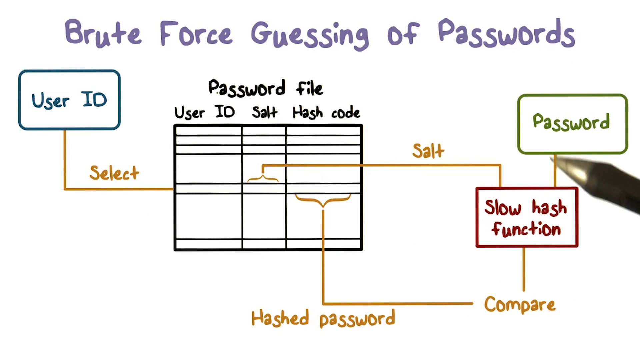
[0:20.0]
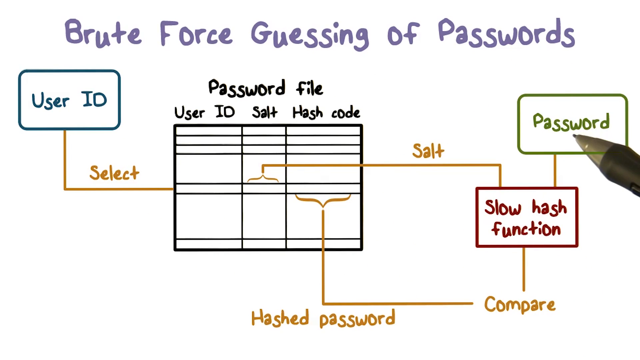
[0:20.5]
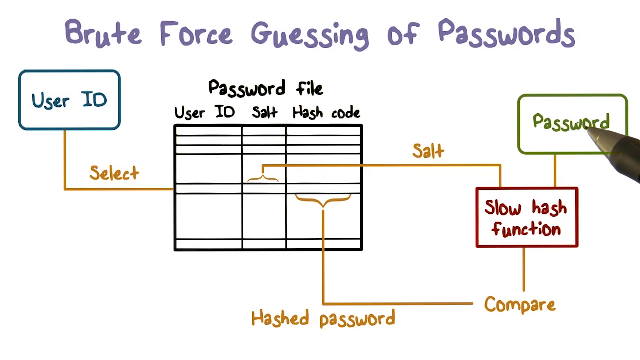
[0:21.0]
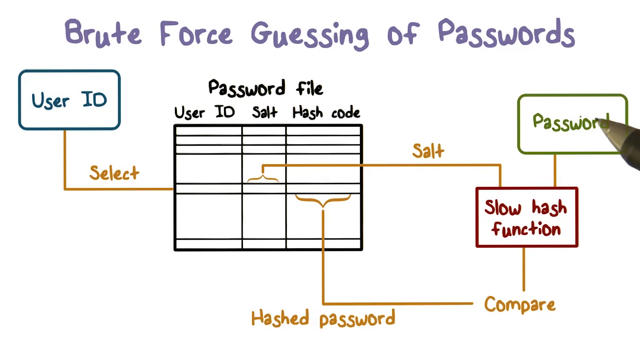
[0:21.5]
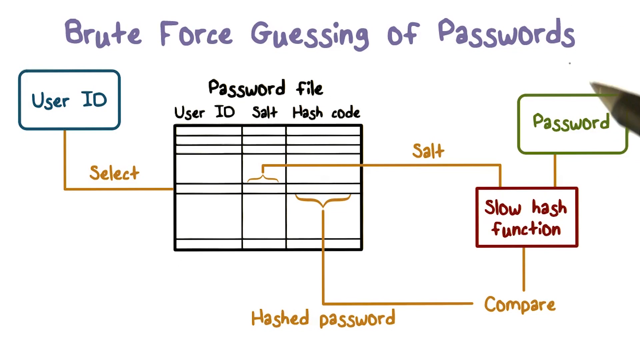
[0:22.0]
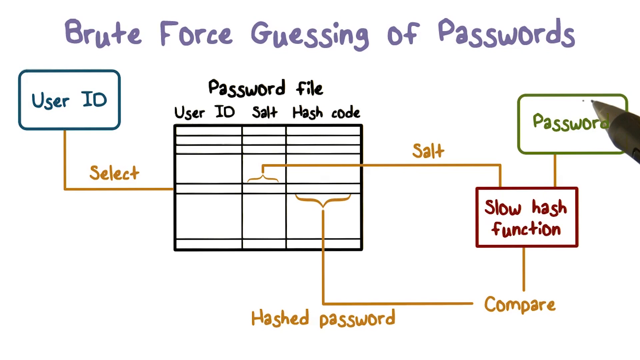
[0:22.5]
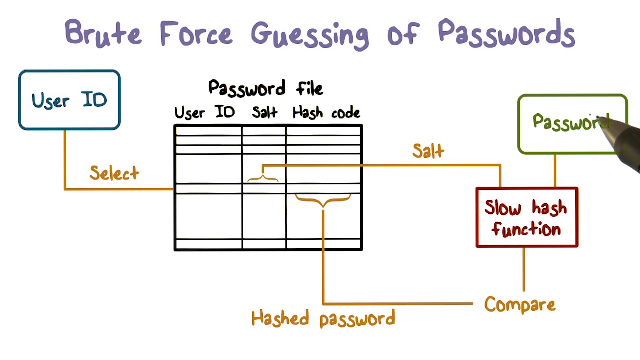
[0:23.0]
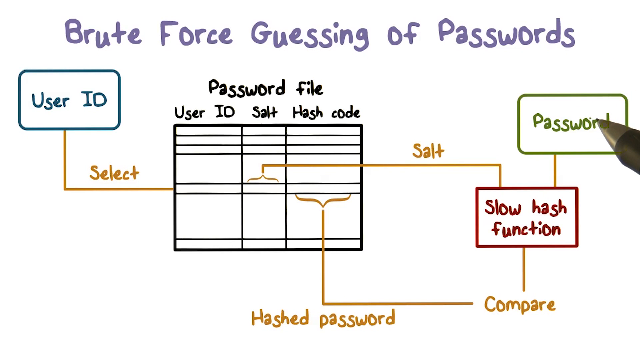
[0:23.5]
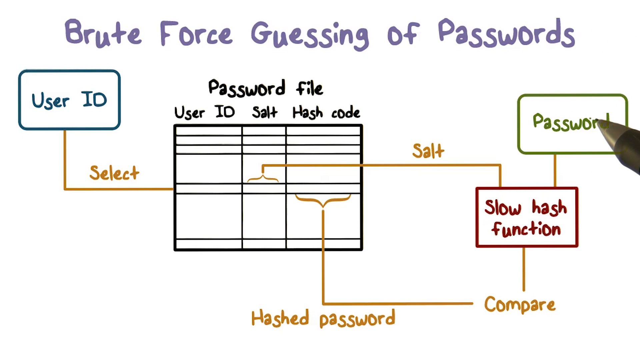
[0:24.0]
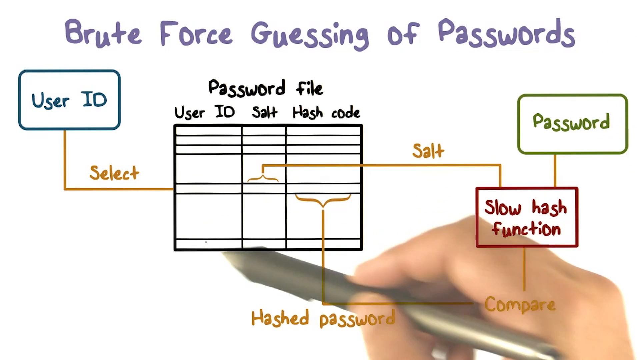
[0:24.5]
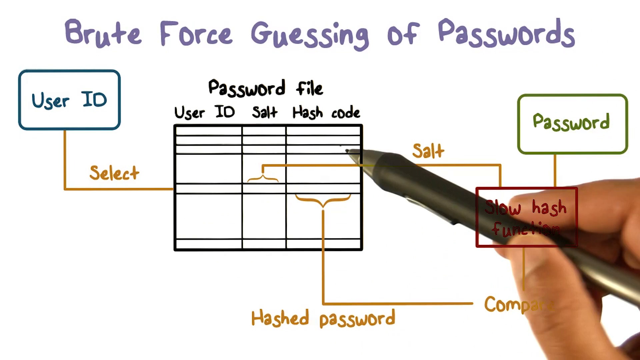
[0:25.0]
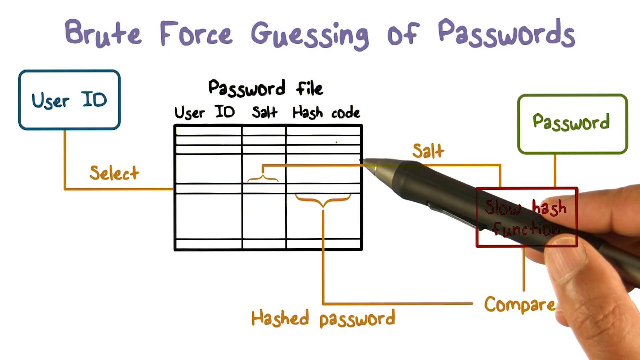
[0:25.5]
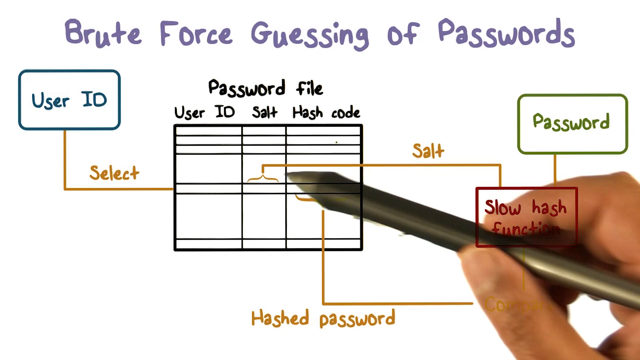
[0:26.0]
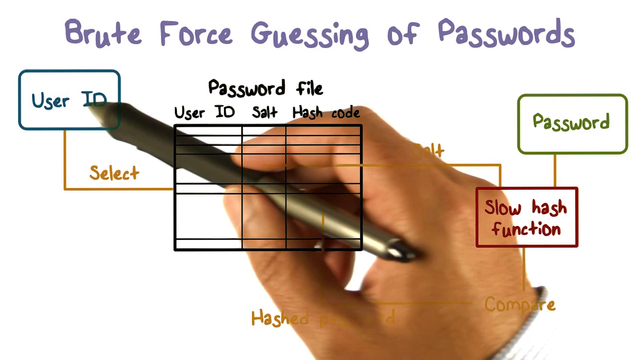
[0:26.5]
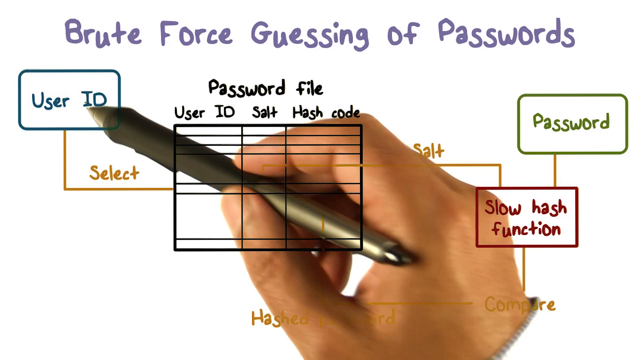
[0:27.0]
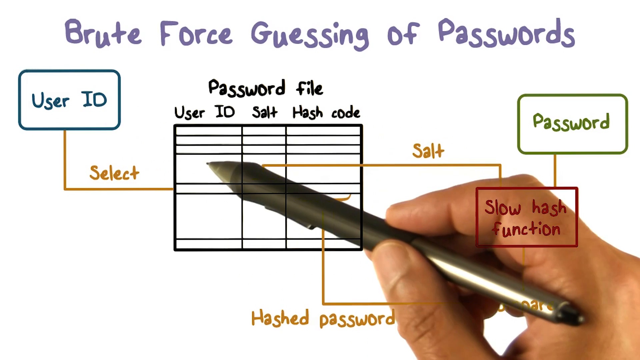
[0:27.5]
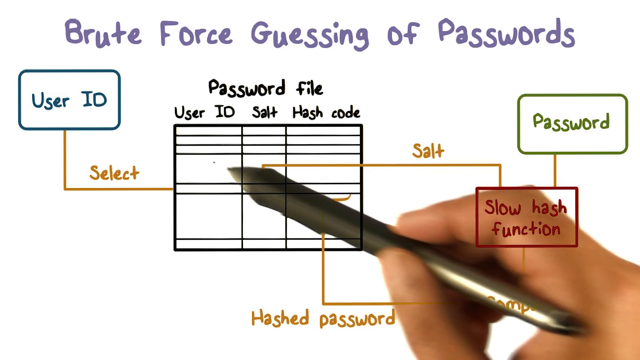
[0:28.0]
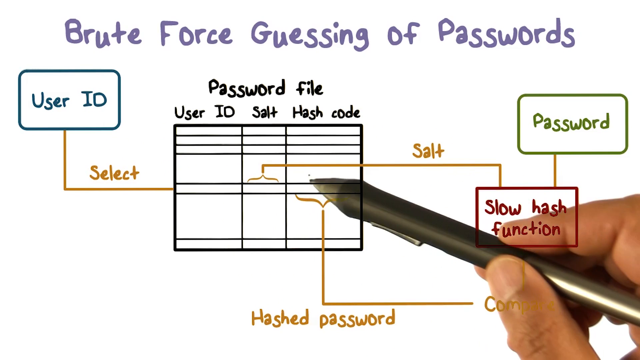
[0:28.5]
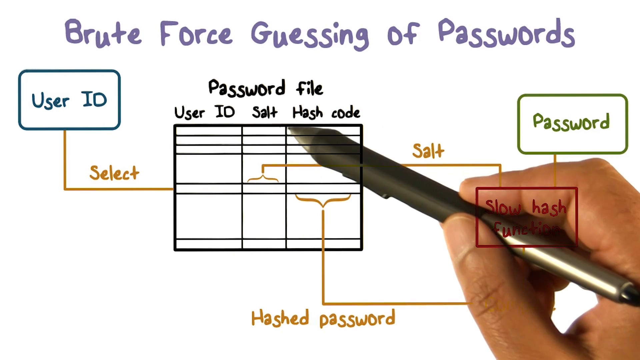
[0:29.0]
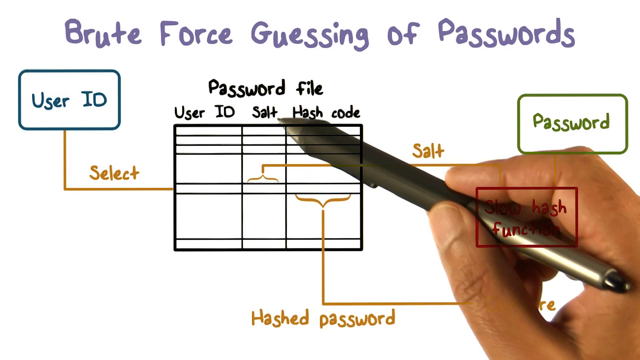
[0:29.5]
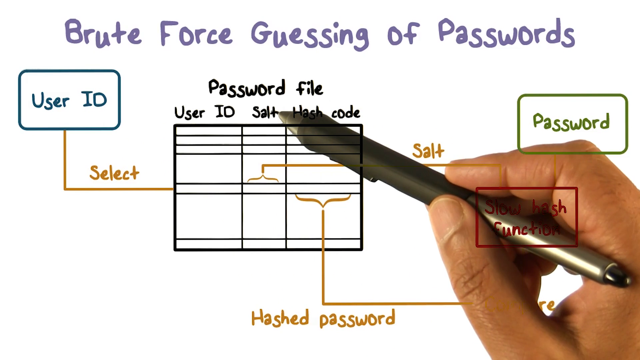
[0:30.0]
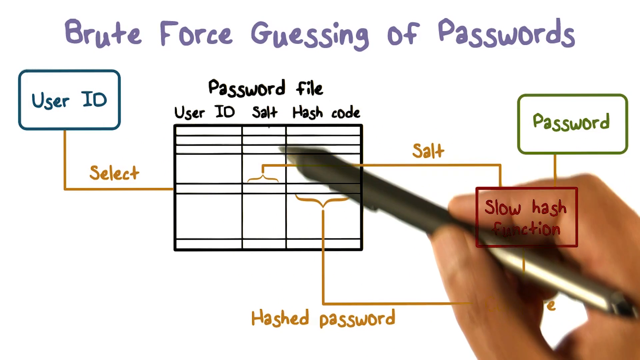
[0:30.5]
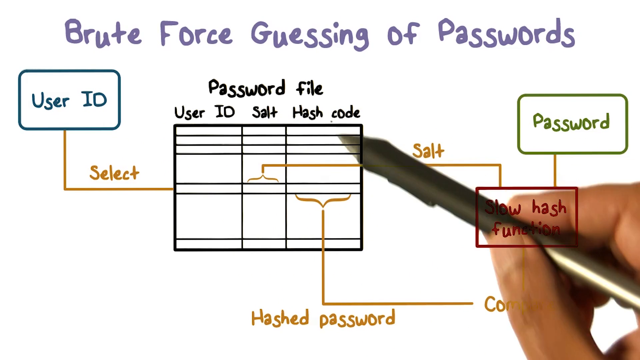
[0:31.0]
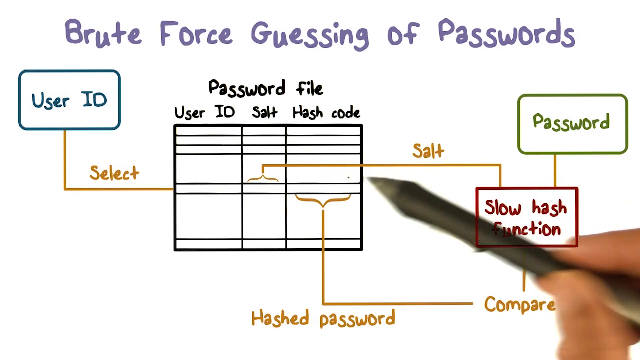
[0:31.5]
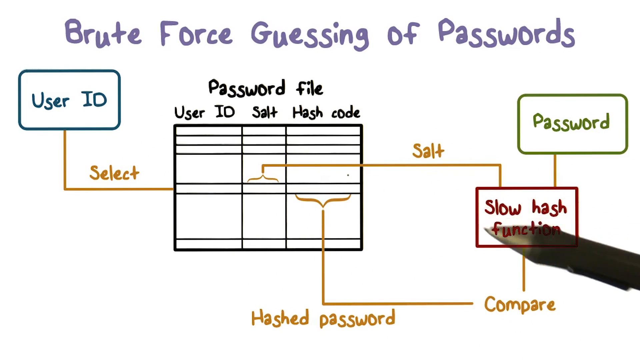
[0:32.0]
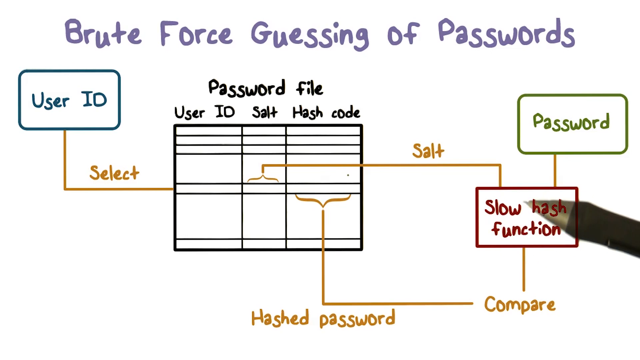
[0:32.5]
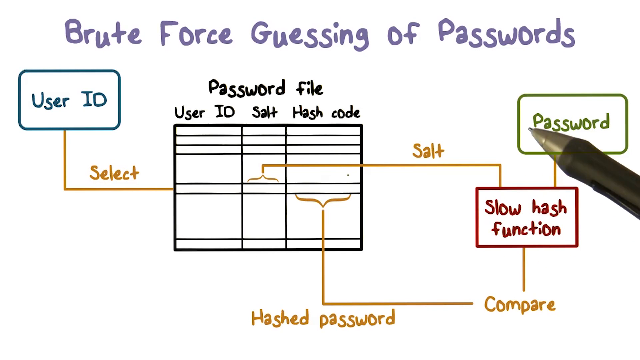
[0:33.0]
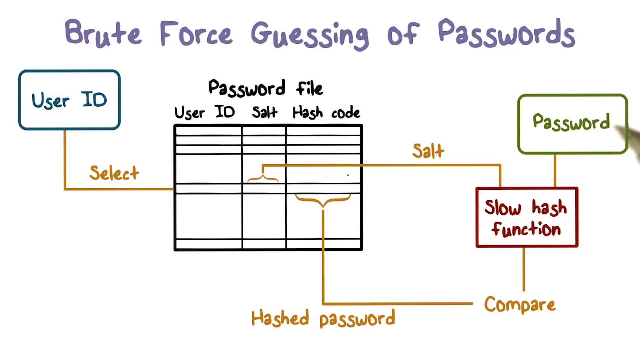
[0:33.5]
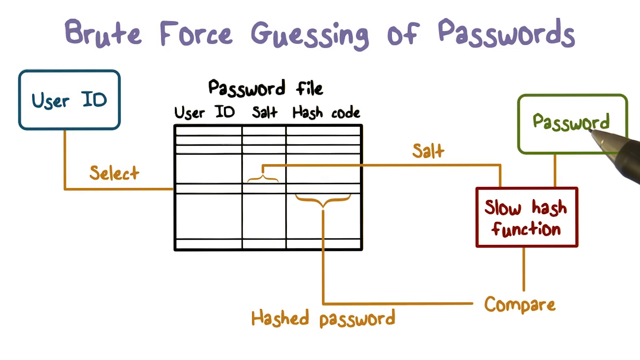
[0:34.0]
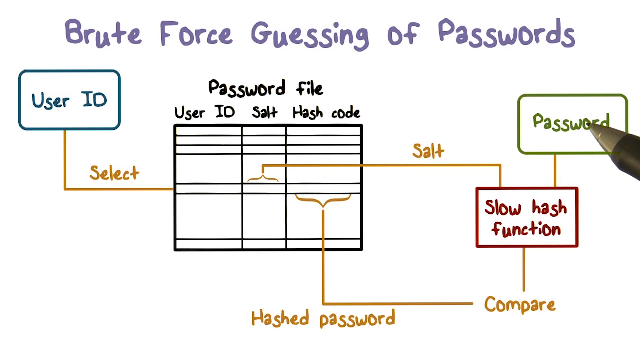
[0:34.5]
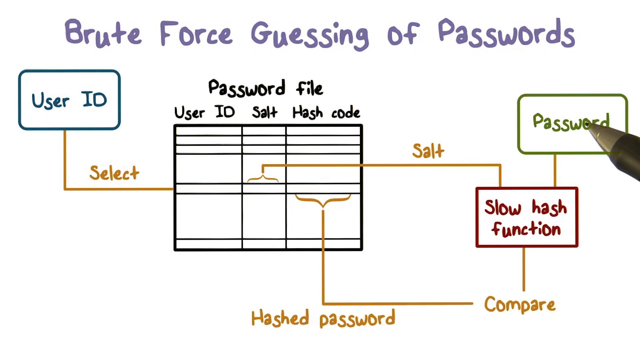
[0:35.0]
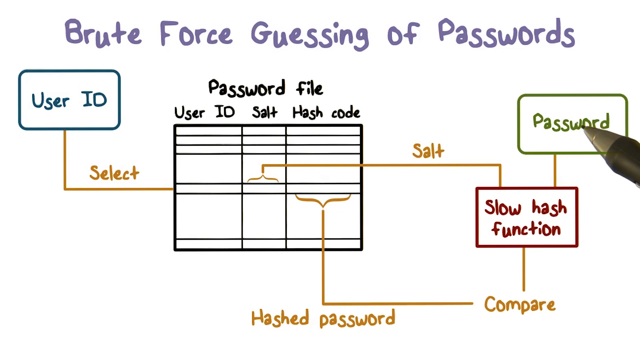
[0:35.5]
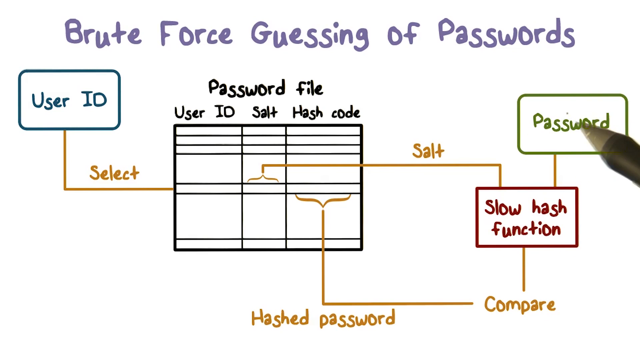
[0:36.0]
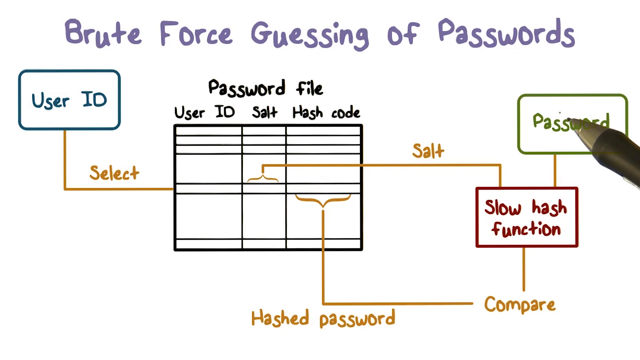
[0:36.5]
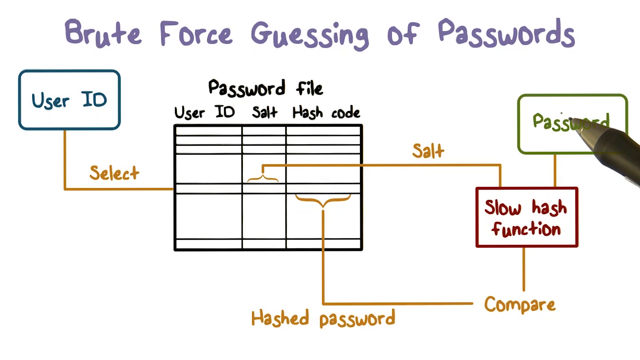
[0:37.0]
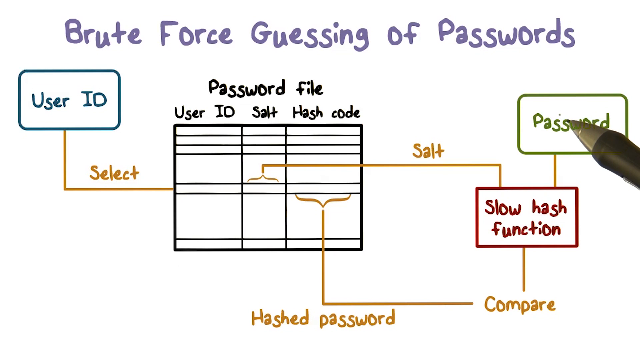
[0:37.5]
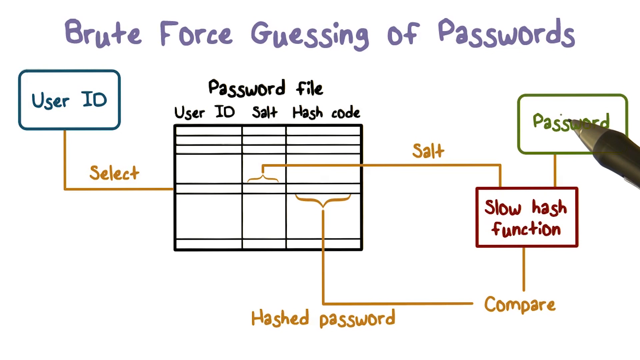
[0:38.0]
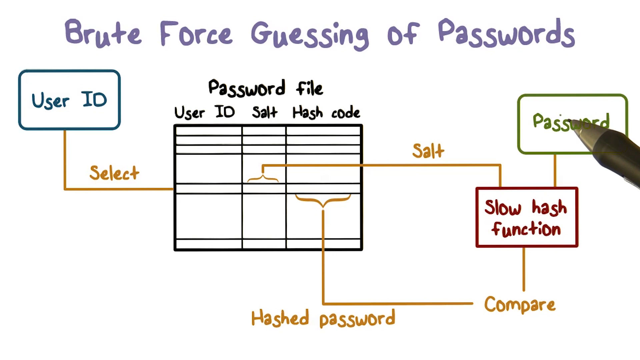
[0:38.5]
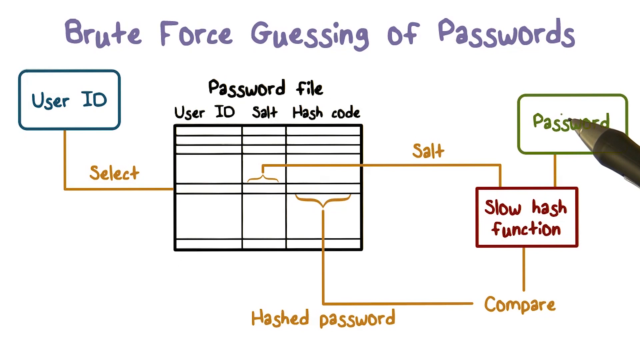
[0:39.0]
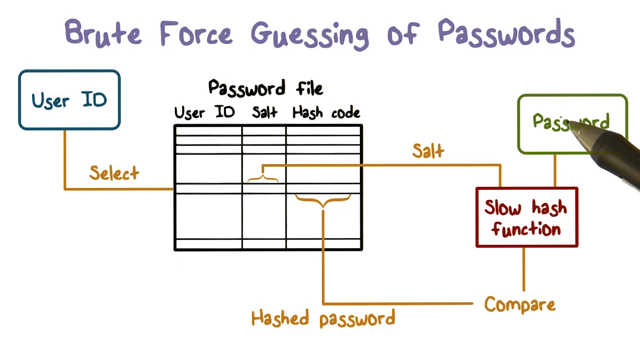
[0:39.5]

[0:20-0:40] The presentation screen titled "Brute Force Guessing of Passwords" remains on view, with the empty data table in the center left of the screen. The table has three columns and seven rows, with the fourth and sixth rows taller than the other five. A person's hand holding a ballpoint pen gestures toward the second column and shows how the data would flow through the process: the data from the second and third columns go to the slow hash function for comparison to get the output of the password. The pen then hovers over the word "password."